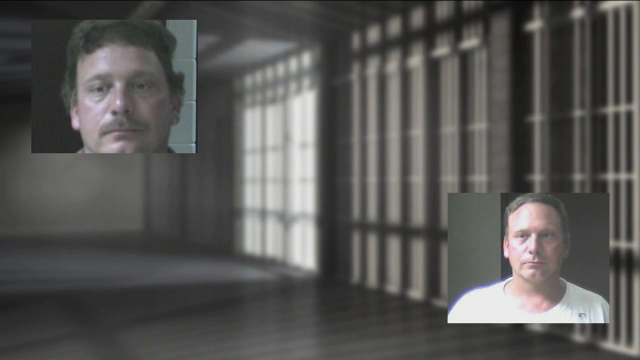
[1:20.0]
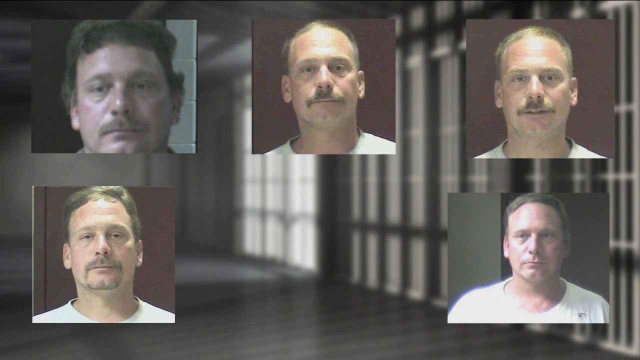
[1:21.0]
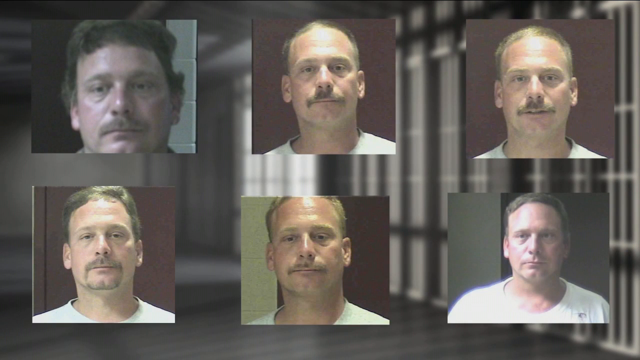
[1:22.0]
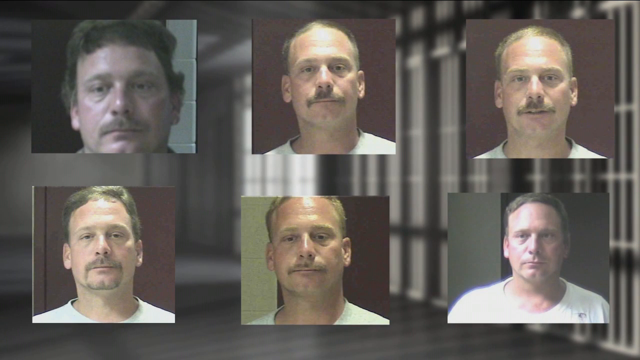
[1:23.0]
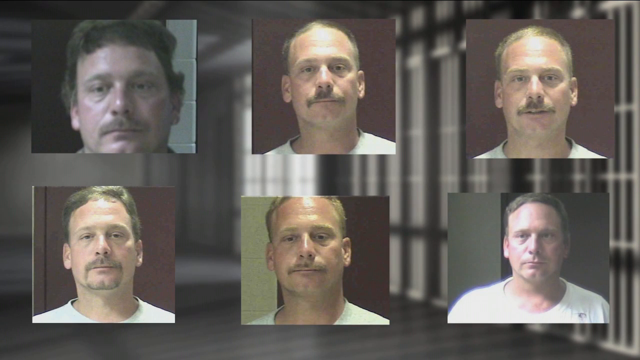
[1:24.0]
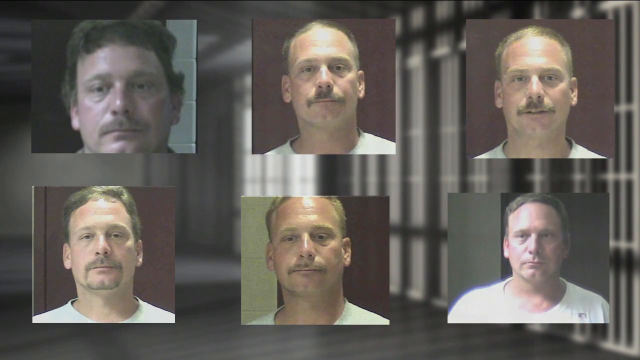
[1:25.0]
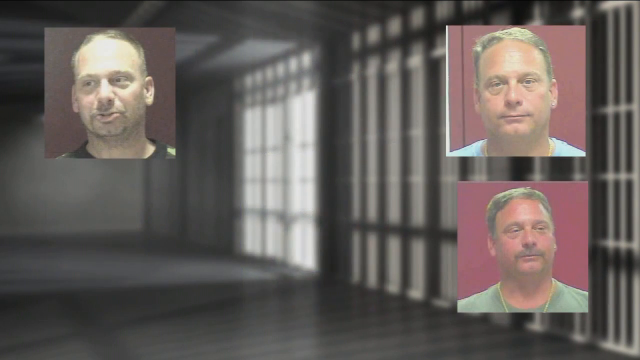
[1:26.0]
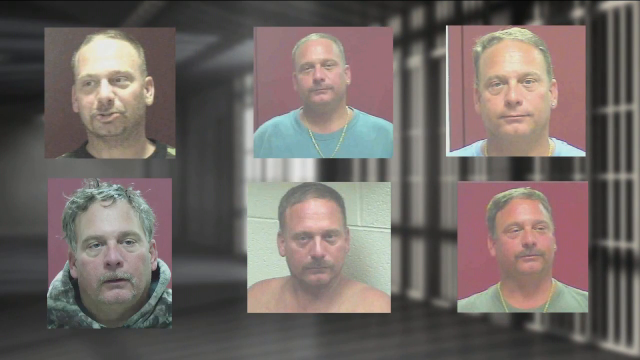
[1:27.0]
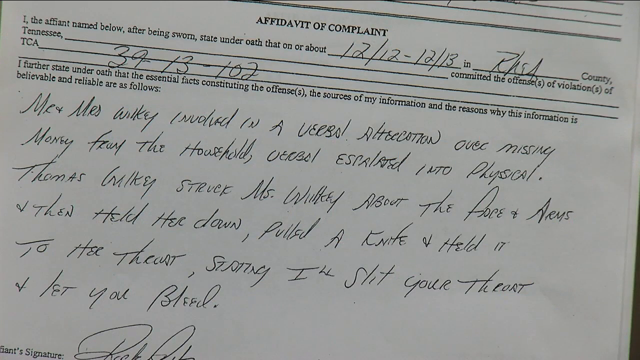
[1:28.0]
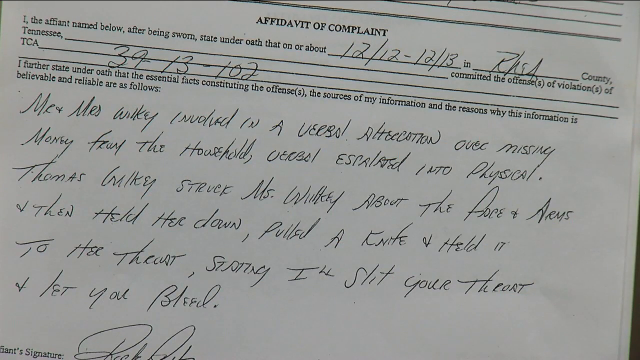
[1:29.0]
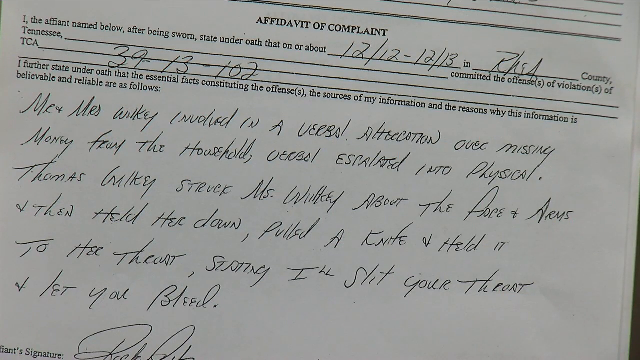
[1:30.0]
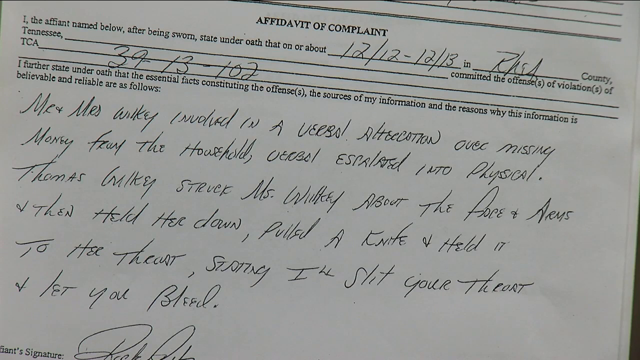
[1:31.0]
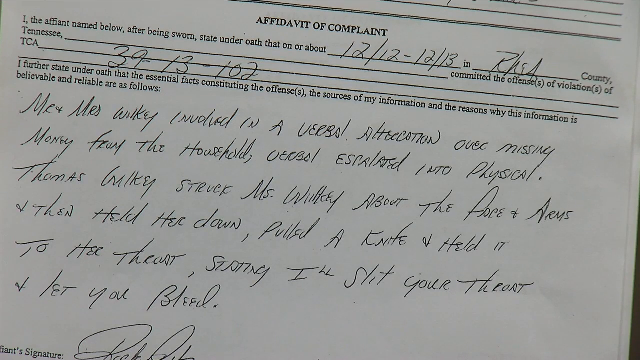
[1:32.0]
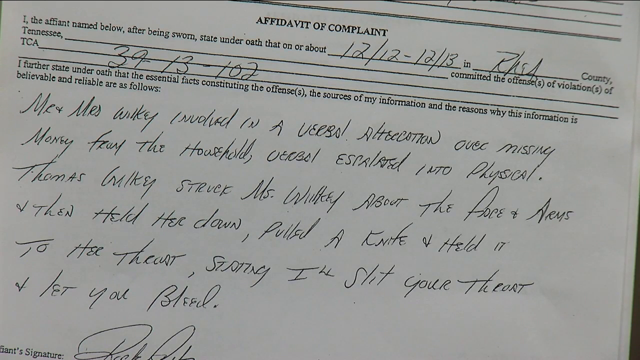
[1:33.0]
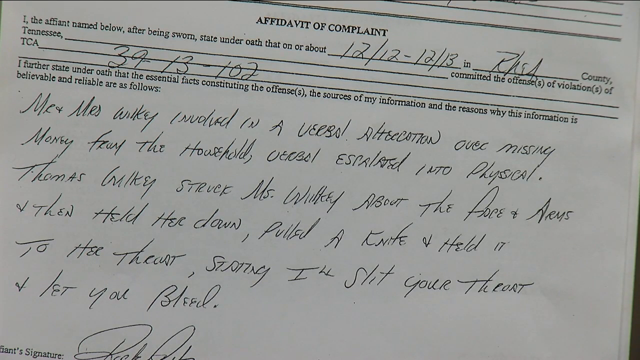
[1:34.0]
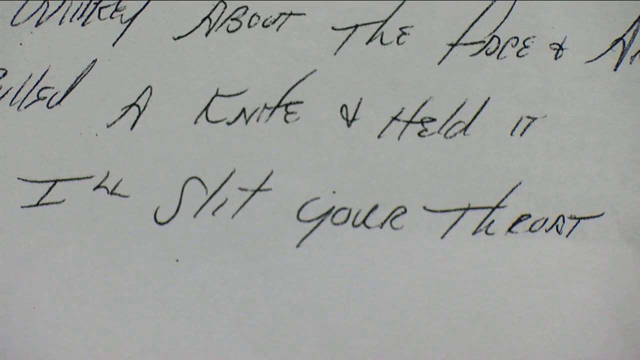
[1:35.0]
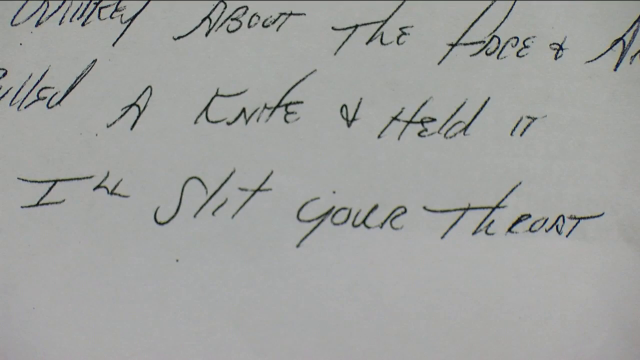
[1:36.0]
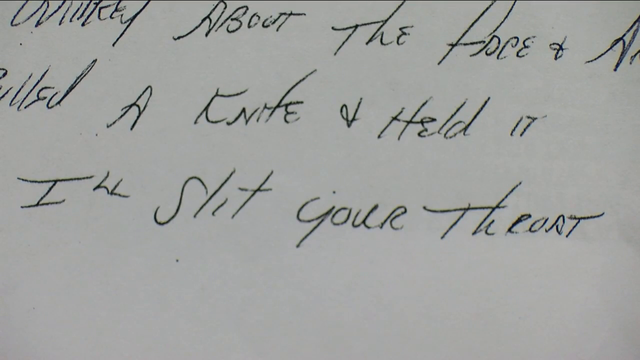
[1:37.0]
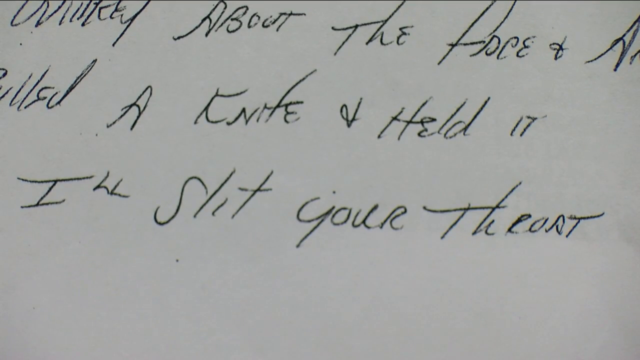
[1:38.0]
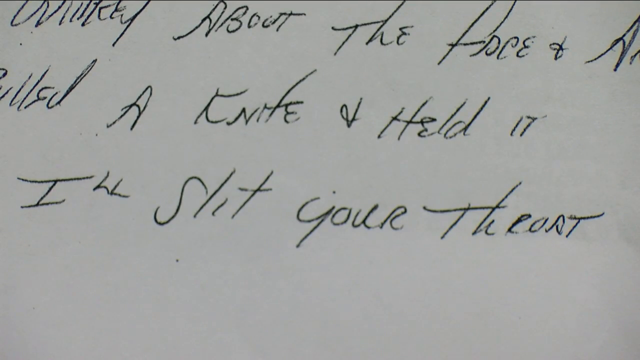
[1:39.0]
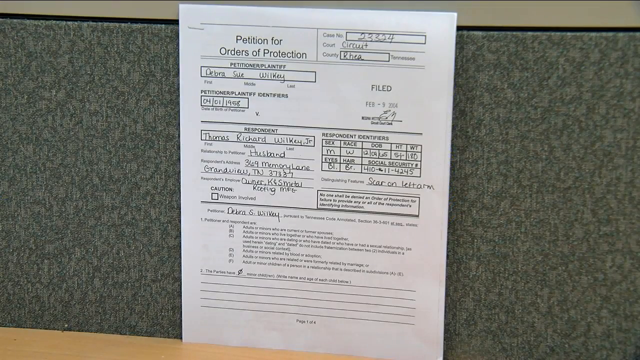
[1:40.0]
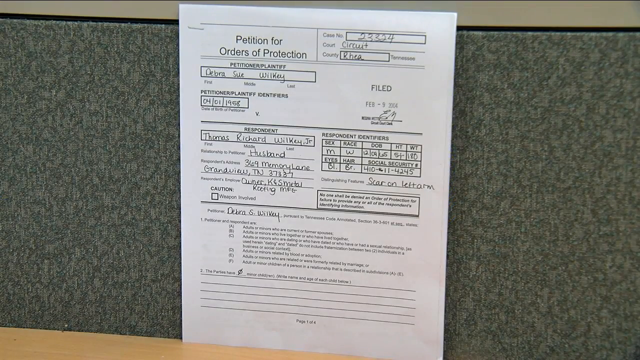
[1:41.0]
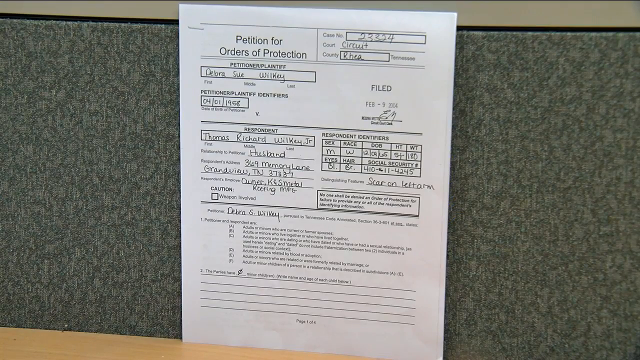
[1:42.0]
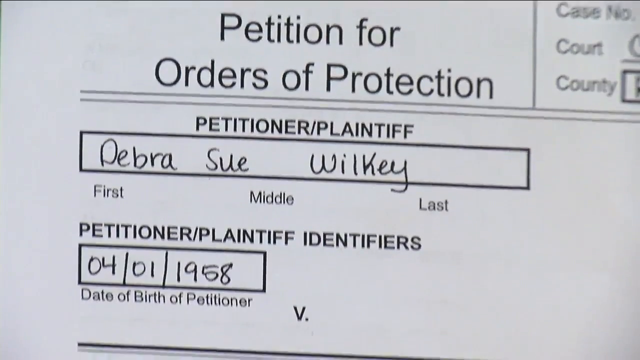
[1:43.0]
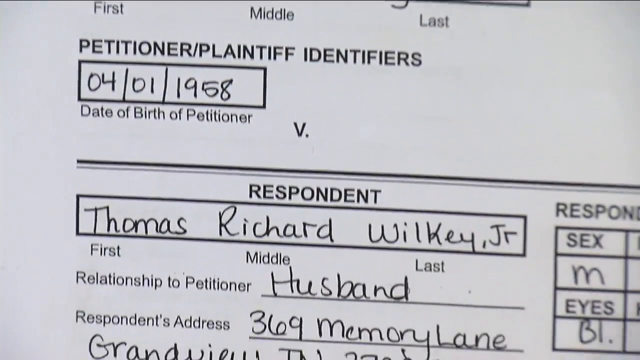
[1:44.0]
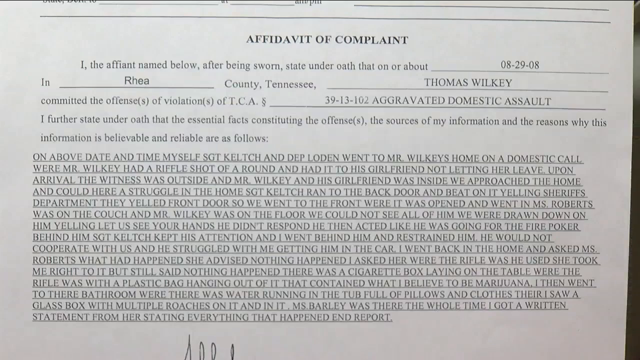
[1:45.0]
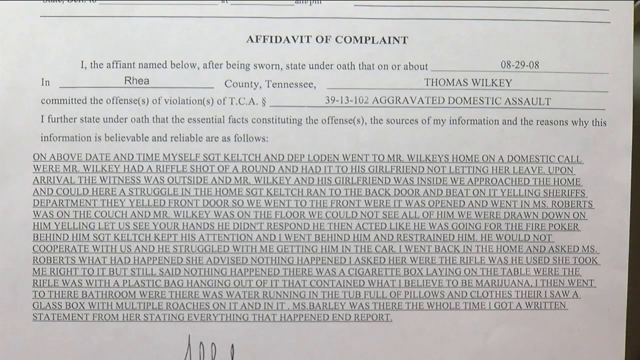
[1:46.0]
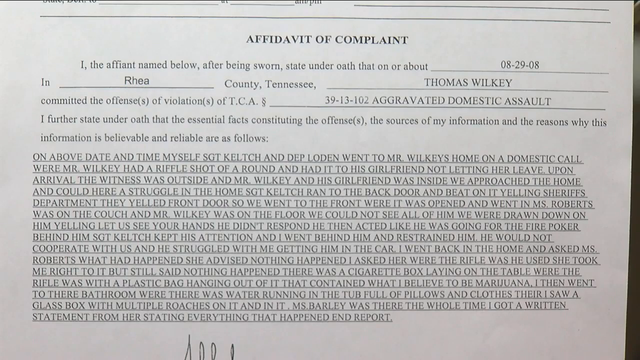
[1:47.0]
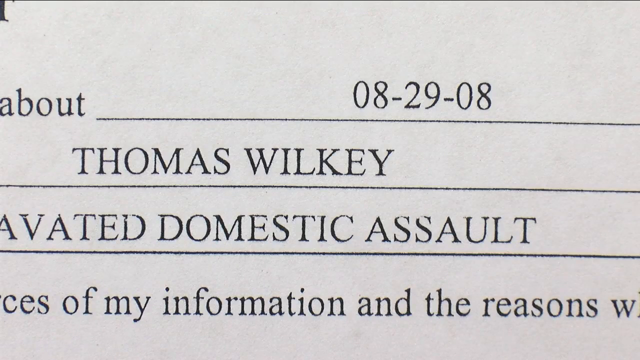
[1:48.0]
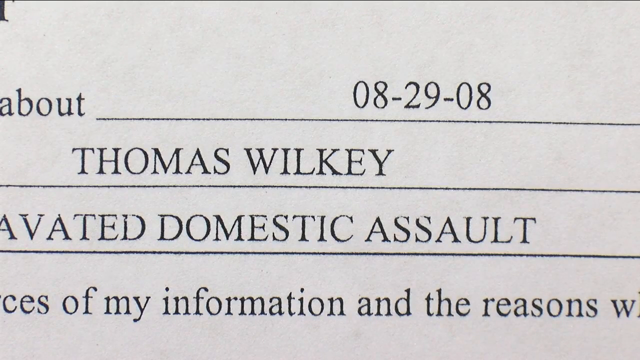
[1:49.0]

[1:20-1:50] The blurred-out jail cell image continues, and now the faces are clearer: two mugshots, one in the top left corner and one in the bottom right corner. The man in the top one has longish short hair that looks perhaps light brown, a mustache, and looks to be in his 50s. The man in the bottom one has a very similar face but shorter hair, no facial hair and a white top. It is unclear whether they are brothers or possibly the same person. More photos appear, all with brown backgrounds, showing a man with a similar face but slightly varying hair and facial hair, and it becomes clear that all six of these photos are the same person. These faces stay for a while and then fade out, and six more photos of the same man appear. In some of these he looks a lot older, in one he looks heavier, in some he looks skinnier than in others, some show more facial hair than others, and one shows really messed-up grey hair. The scene switches to handwriting on a document, which stays on screen for a while and then zooms in further so some writing can be read: "I'll slit your throat". It then switches to another document with the names "Deborah Sue Wilkie" and "Thomas Richard Wilkie" on it, and the document zooms in.